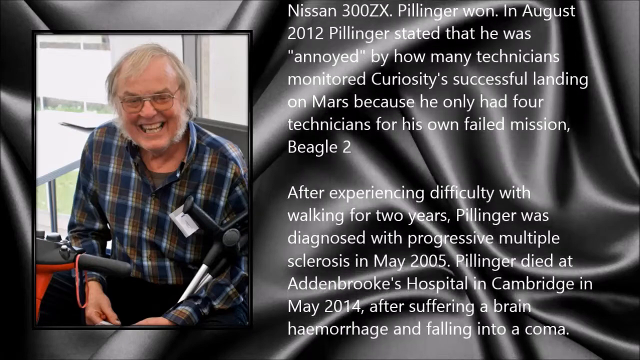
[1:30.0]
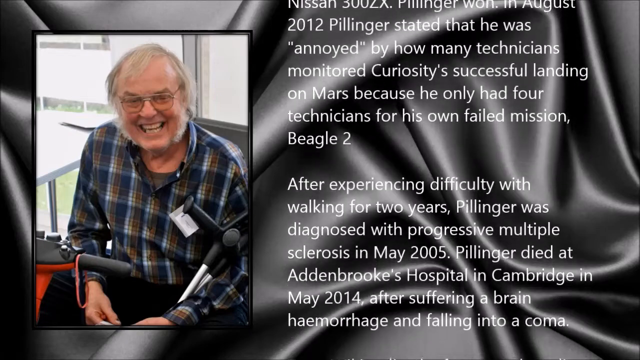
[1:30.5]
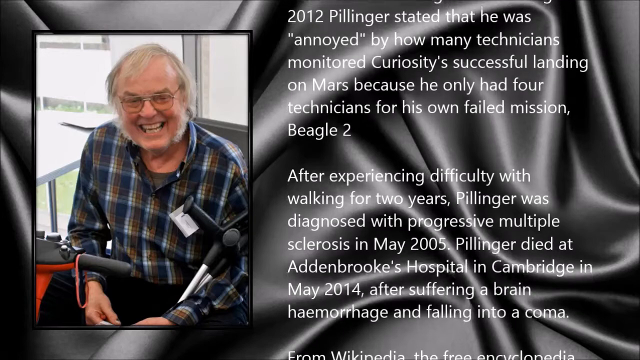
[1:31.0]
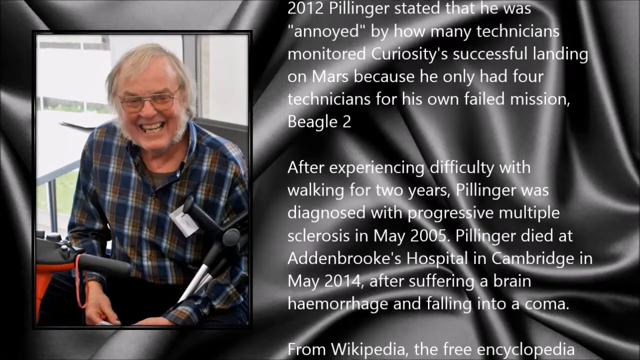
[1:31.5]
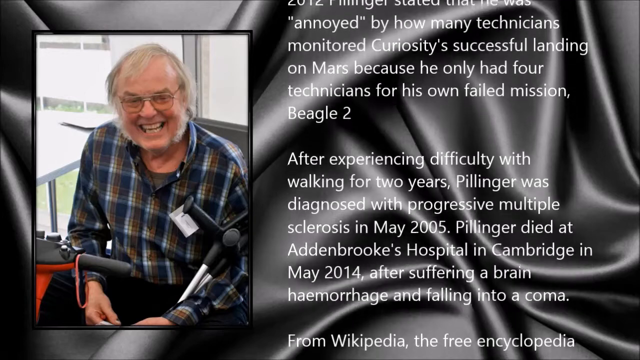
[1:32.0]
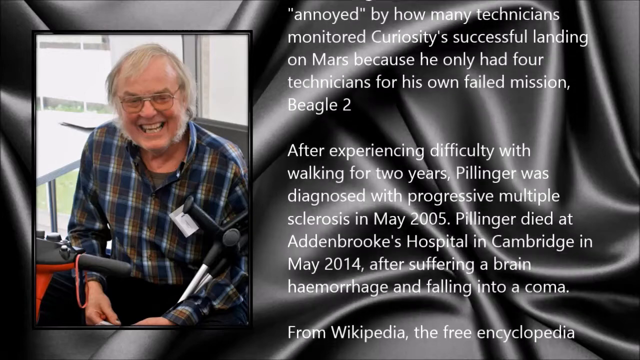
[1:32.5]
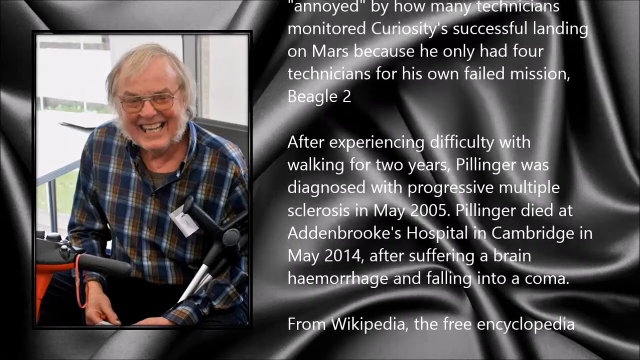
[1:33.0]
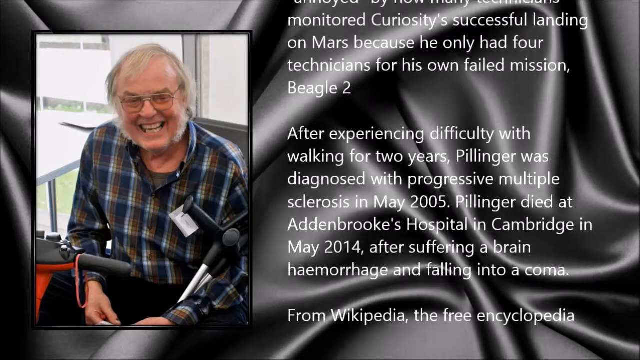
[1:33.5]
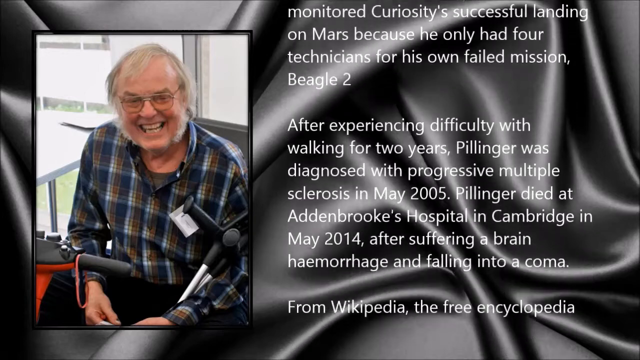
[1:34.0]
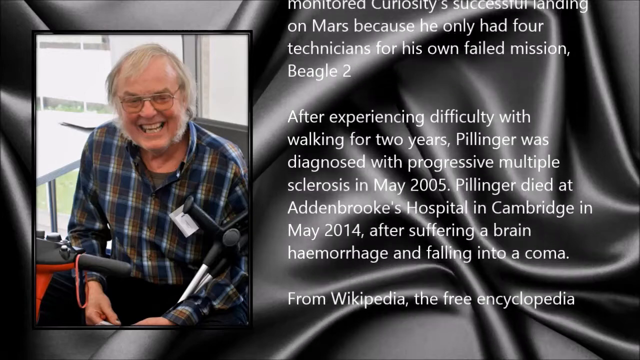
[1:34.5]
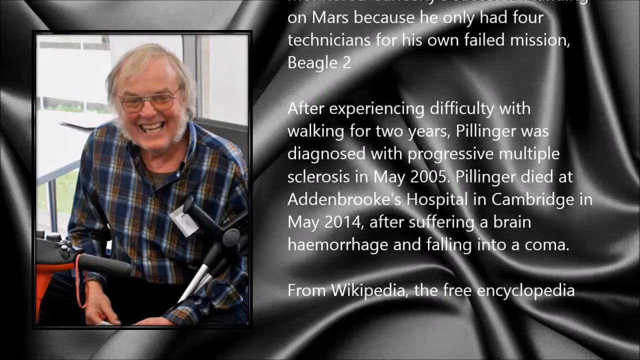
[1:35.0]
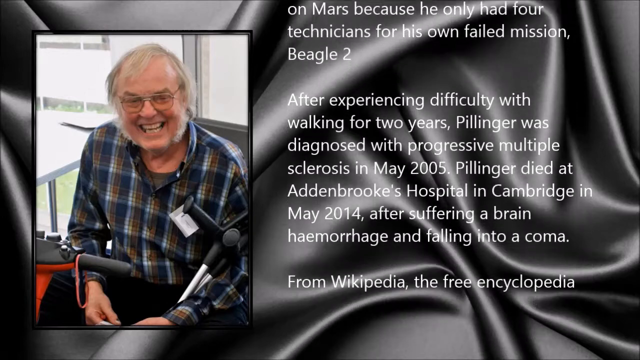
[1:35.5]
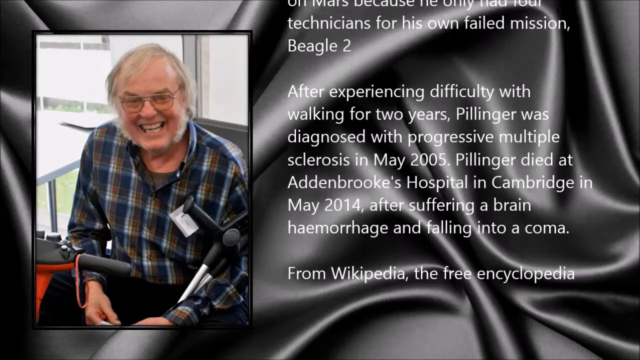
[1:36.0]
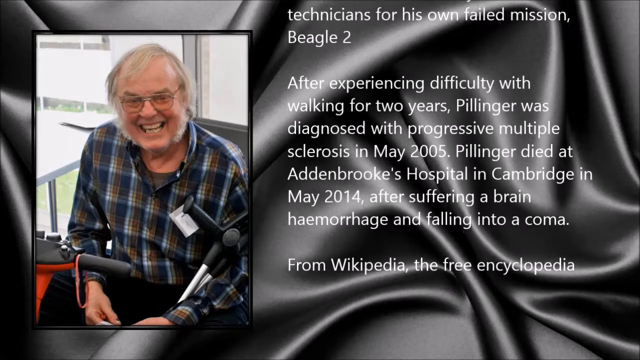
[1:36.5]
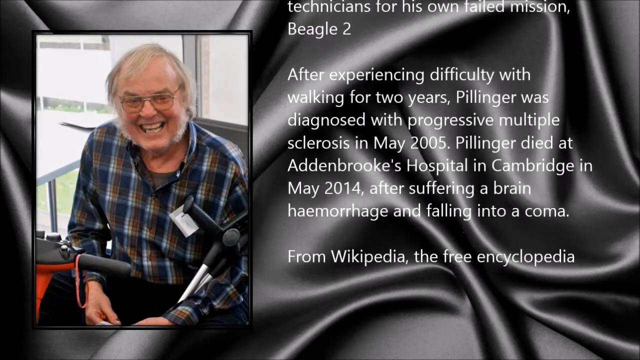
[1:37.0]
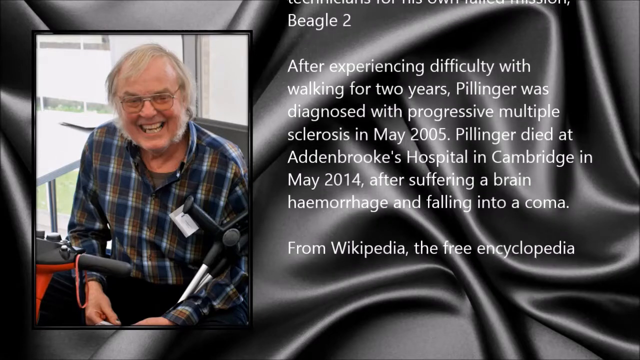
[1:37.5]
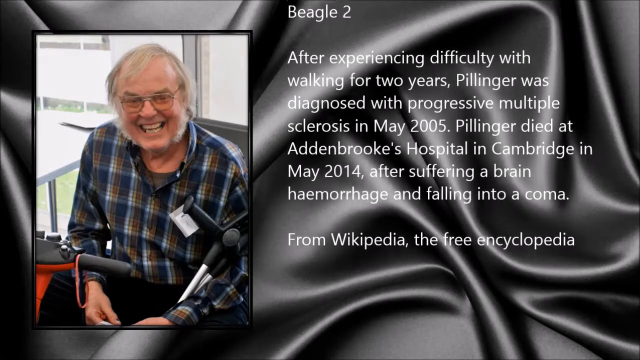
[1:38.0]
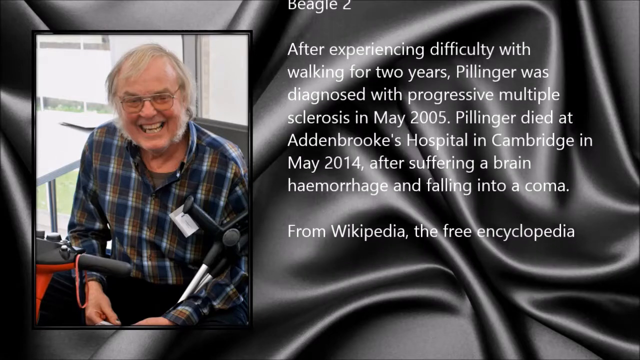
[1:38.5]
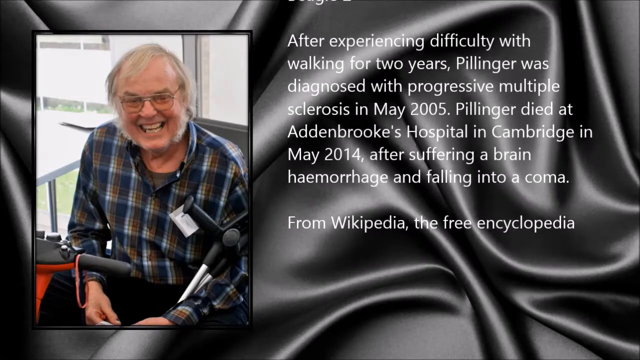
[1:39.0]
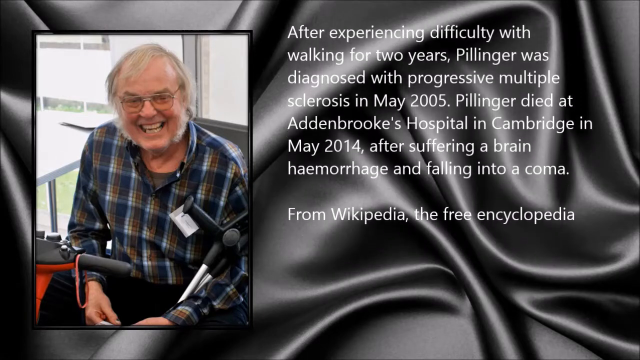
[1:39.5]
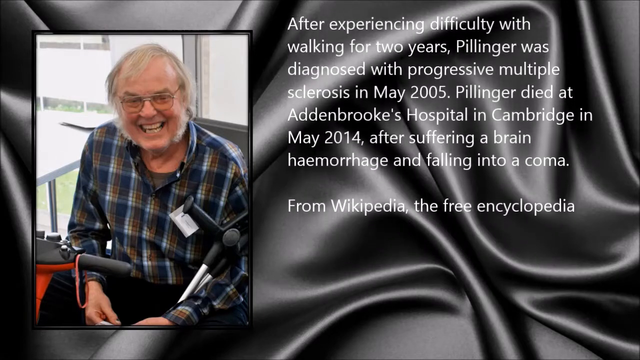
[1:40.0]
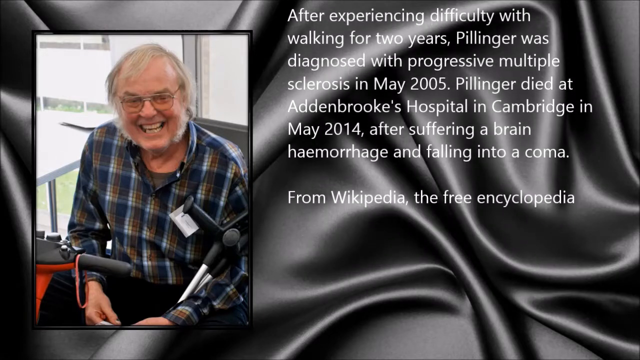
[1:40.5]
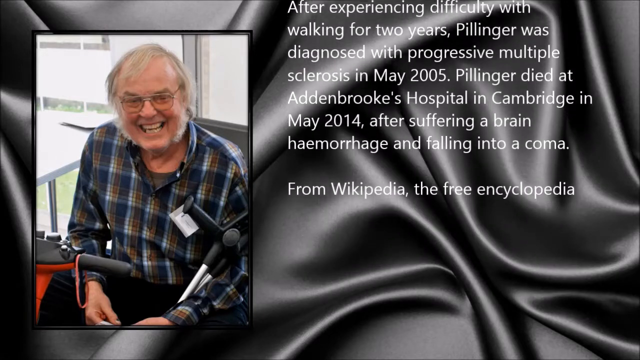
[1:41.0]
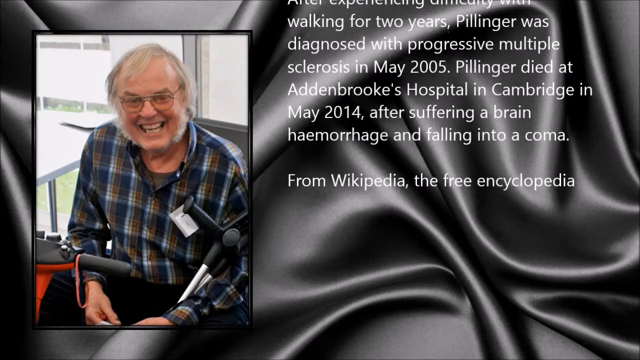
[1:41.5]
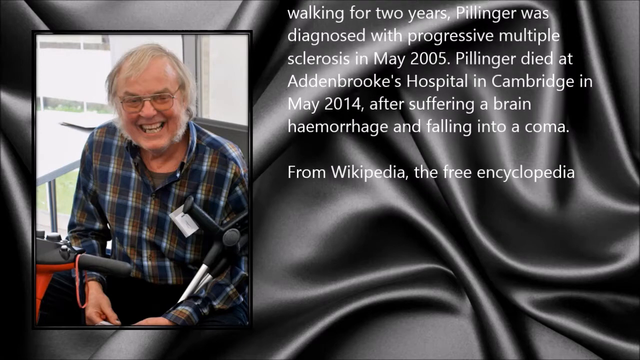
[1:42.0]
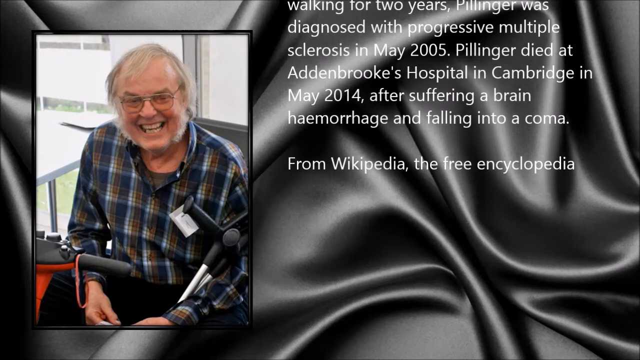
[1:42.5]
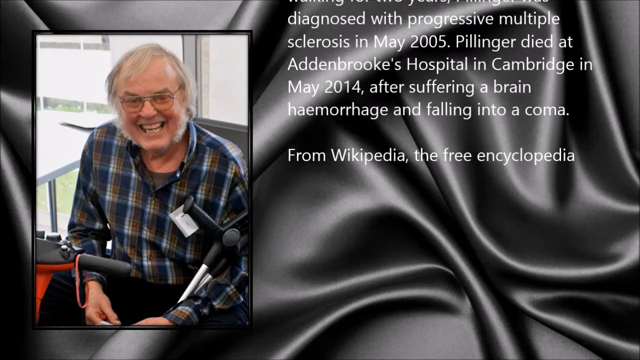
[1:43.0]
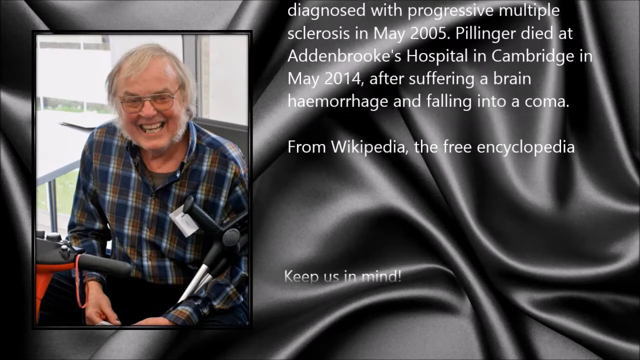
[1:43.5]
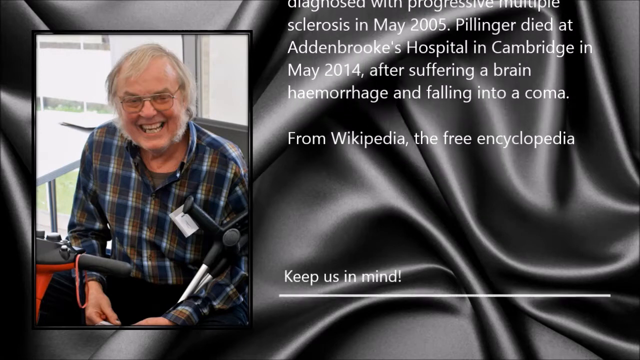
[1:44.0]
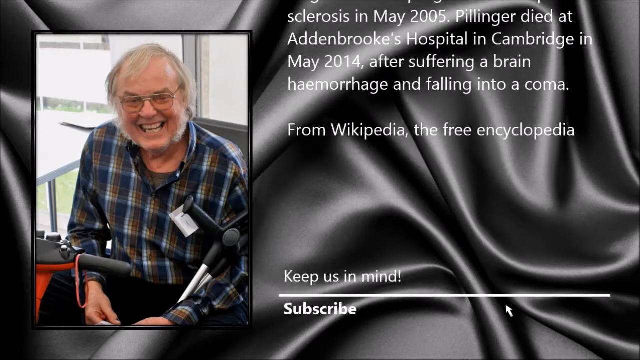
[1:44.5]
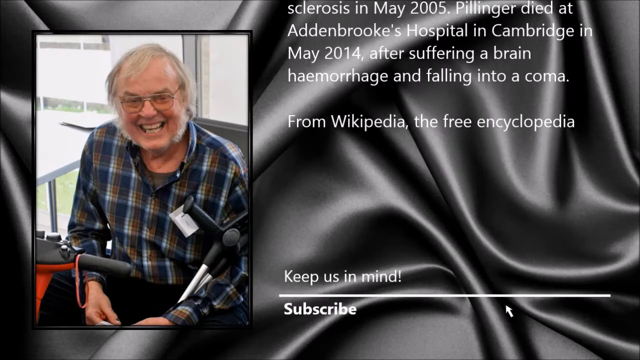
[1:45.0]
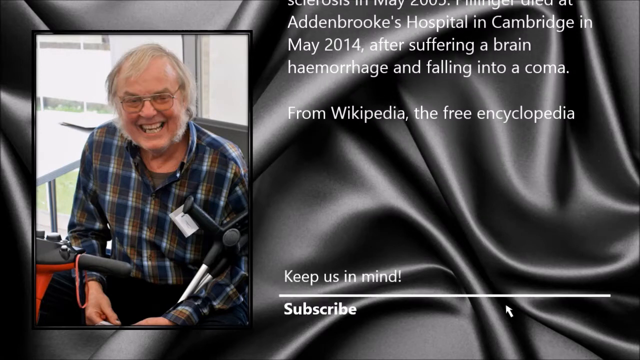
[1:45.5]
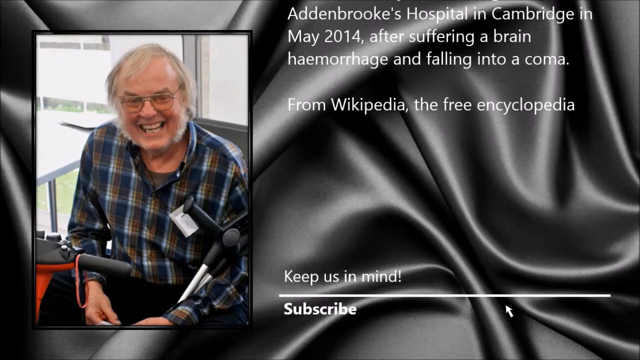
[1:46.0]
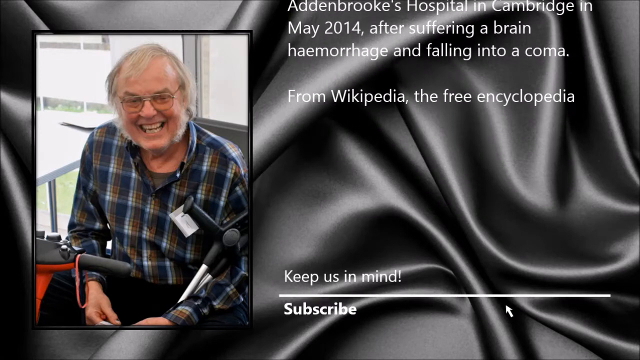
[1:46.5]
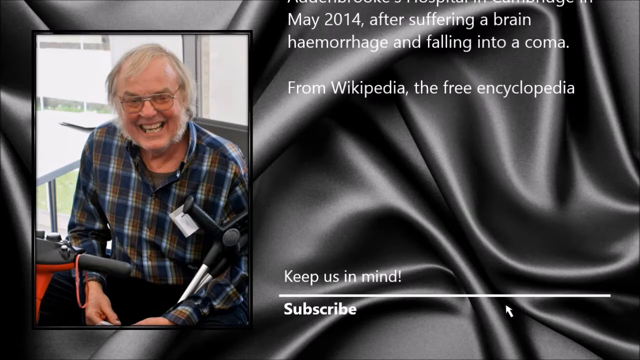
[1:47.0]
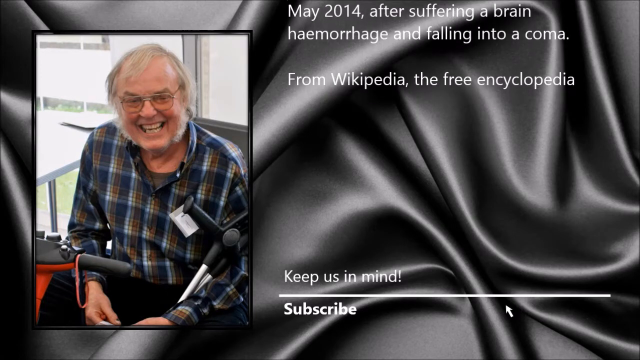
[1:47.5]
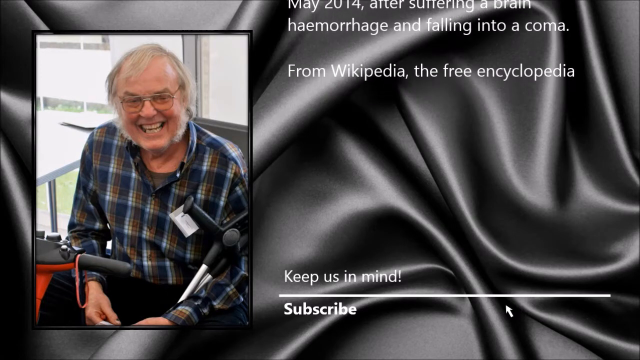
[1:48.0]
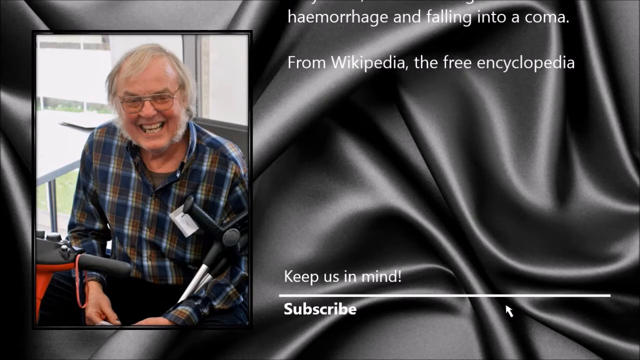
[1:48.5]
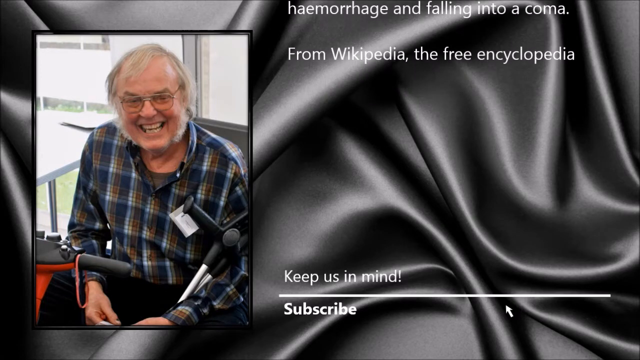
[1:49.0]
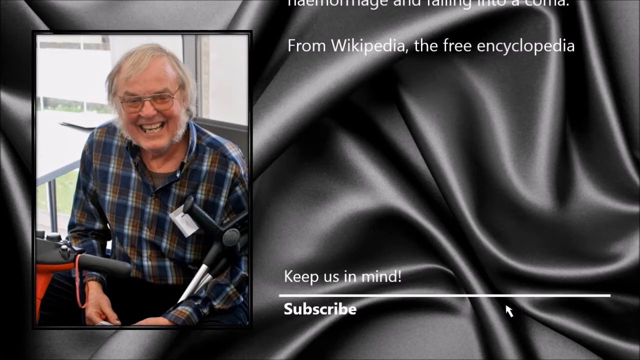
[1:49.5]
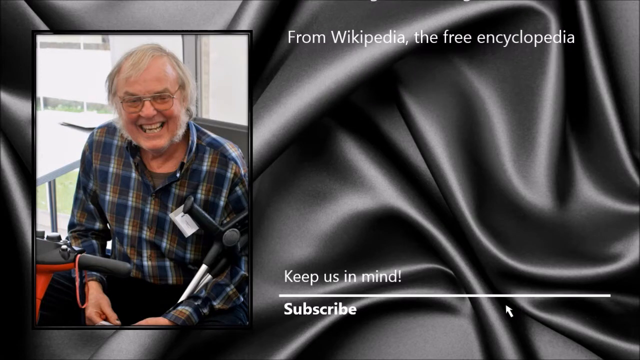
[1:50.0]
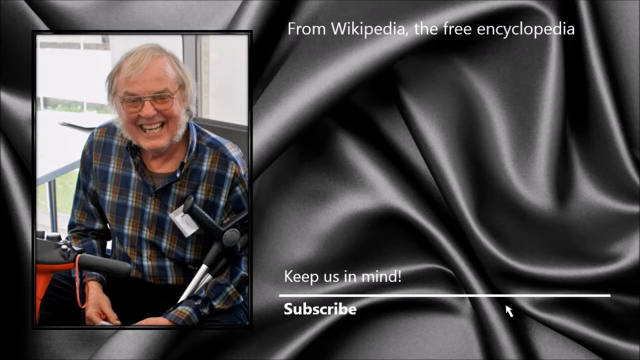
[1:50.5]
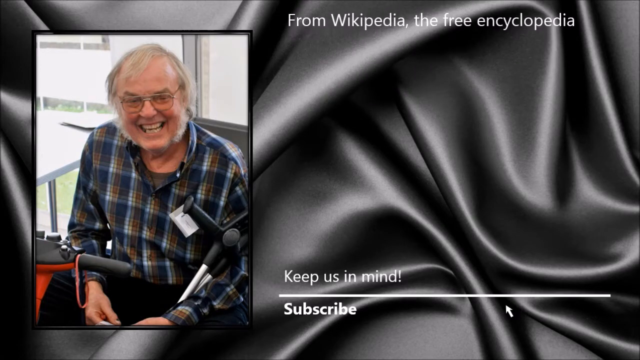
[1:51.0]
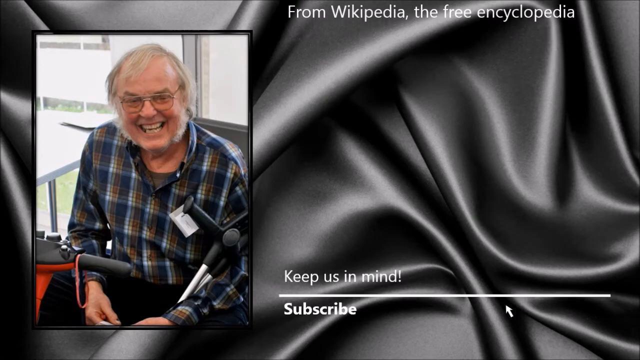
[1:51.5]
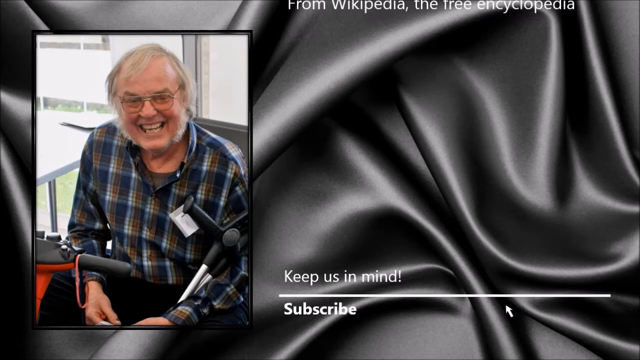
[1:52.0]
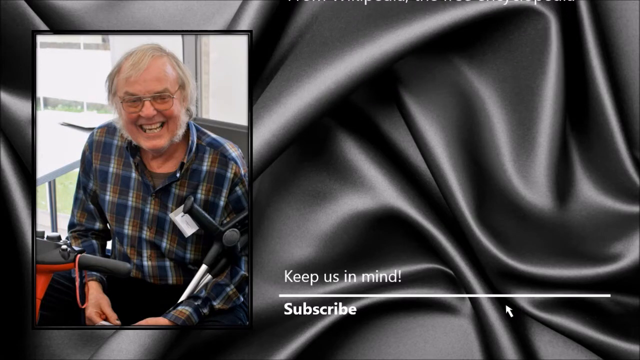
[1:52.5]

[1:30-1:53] The screen has black silk as the background. An image on the left of the screen shows a man smiling at the camera. He wears glasses and a check shirt in blue, white and brown, and has grey-white hair and a beard. He appears to be sat in a mobility scooter and has crutches under his arm. To the right of the image, half of the screen shows white text scrolling upwards. The text states that after experiencing difficulty with walking, Pillinger was diagnosed with progressive multiple sclerosis in May 2005, and that he died at Addenbrookes Hospital in Cambridge in May 2014 after suffering a brain haemorrhage and falling into a coma. After a space, the white text says "from Wikipedia the free encyclopedia". As this text scrolls upwards, the words "subscribe" and "keep us in mind" appear at the bottom right of the screen. The screen then shows just the silk background as the image and writing disappear.